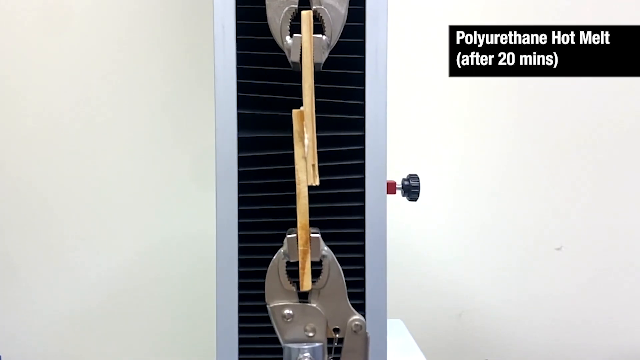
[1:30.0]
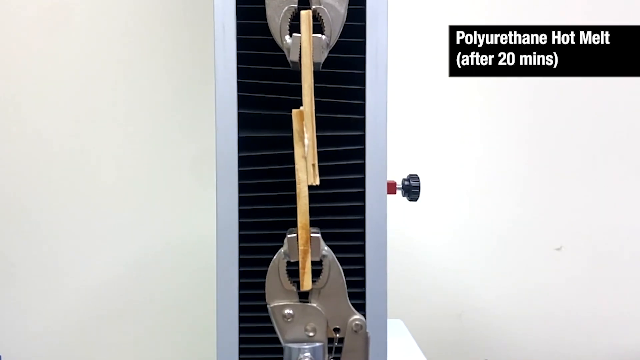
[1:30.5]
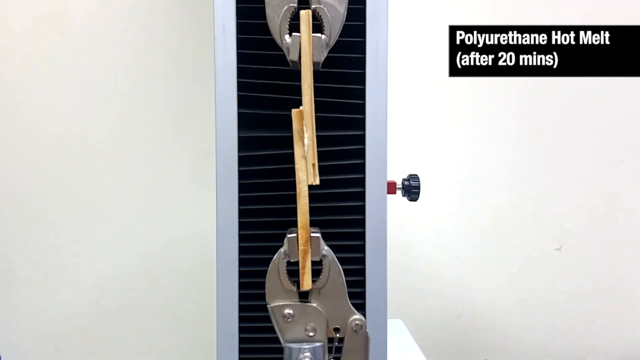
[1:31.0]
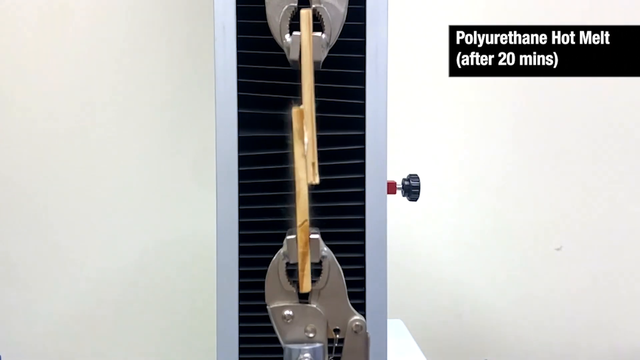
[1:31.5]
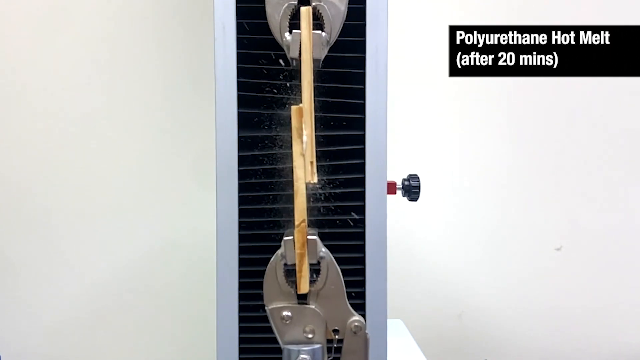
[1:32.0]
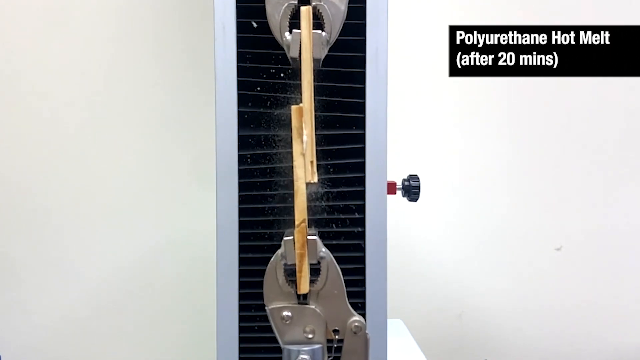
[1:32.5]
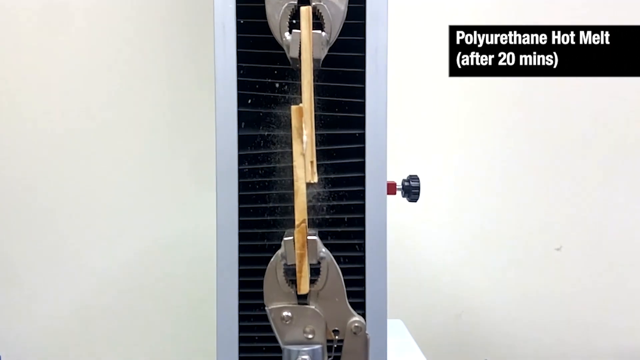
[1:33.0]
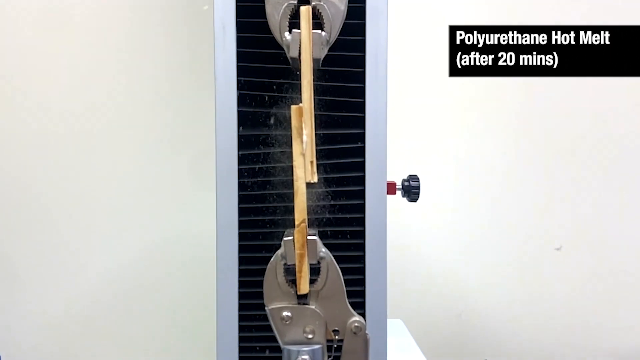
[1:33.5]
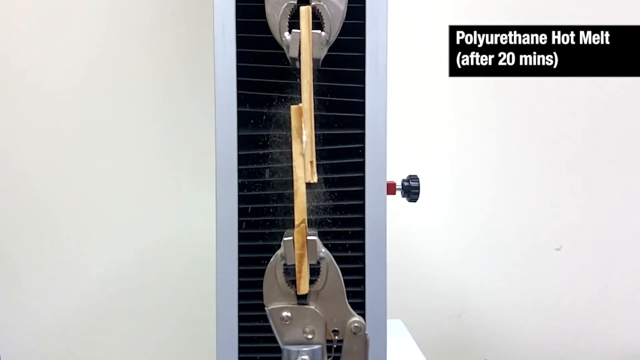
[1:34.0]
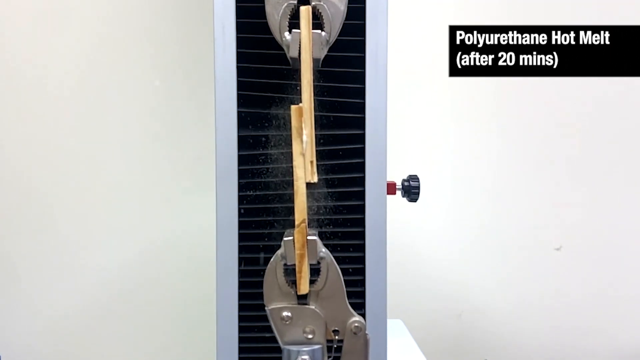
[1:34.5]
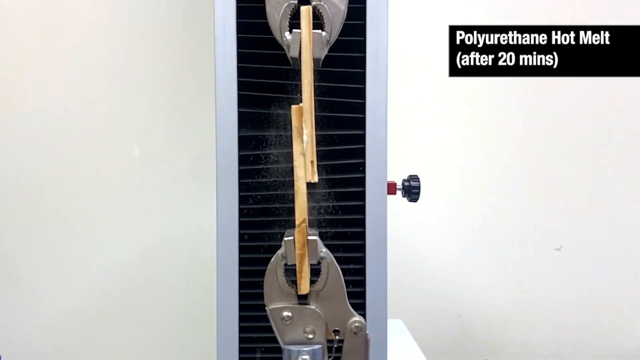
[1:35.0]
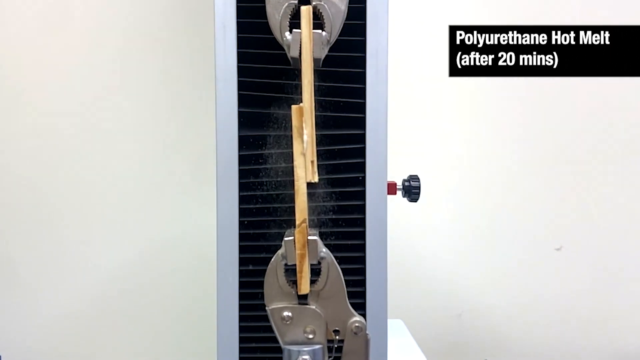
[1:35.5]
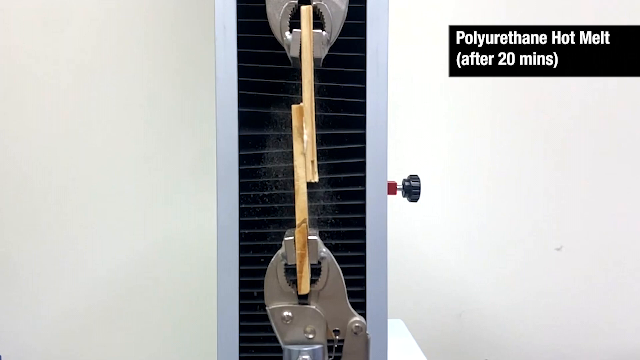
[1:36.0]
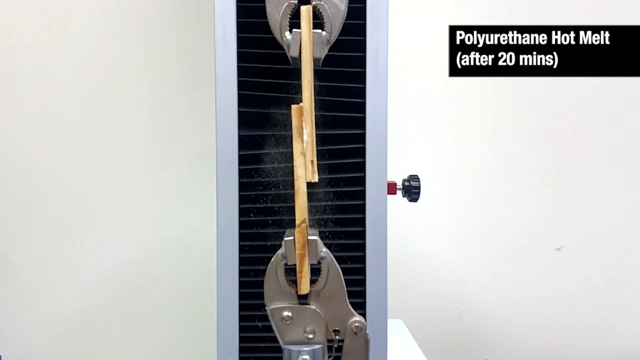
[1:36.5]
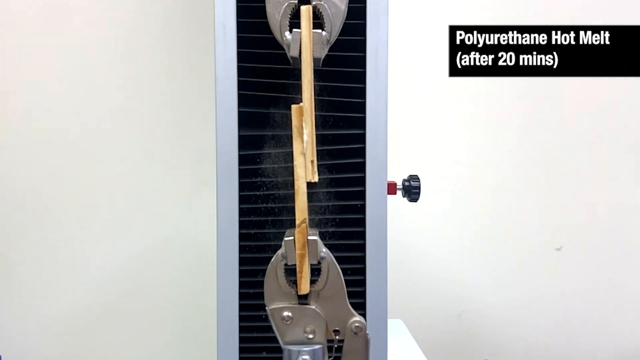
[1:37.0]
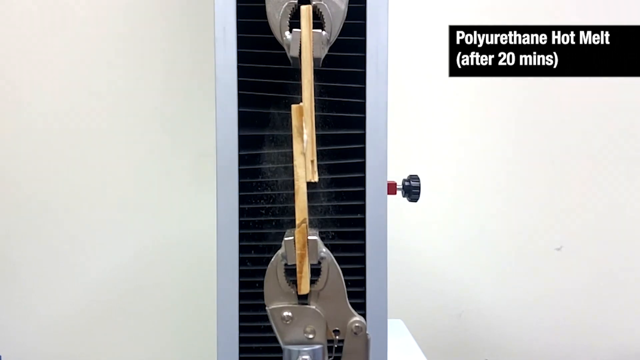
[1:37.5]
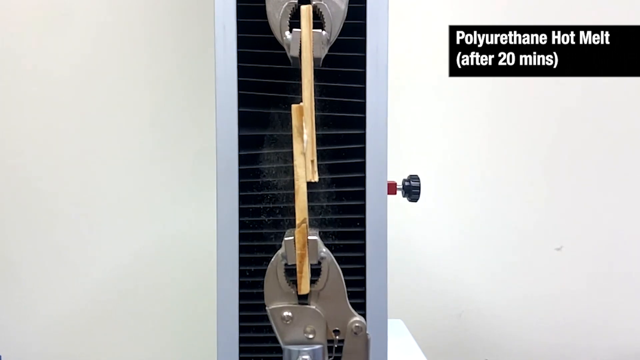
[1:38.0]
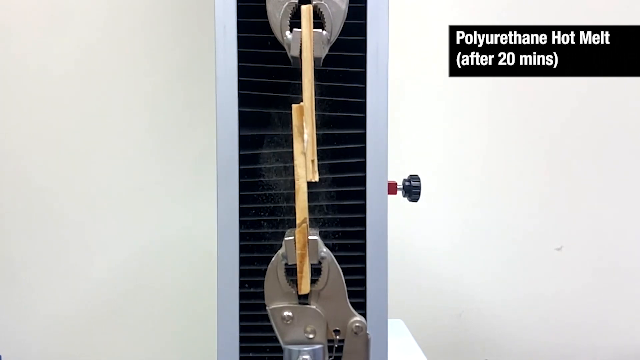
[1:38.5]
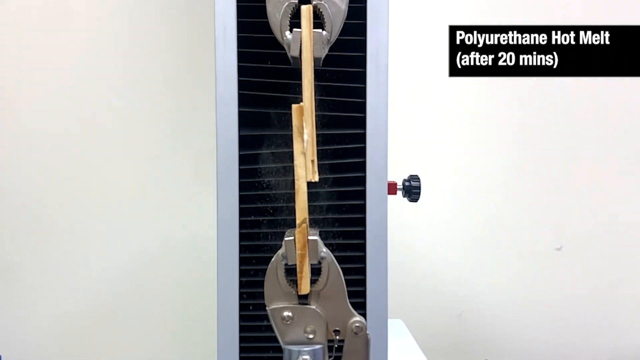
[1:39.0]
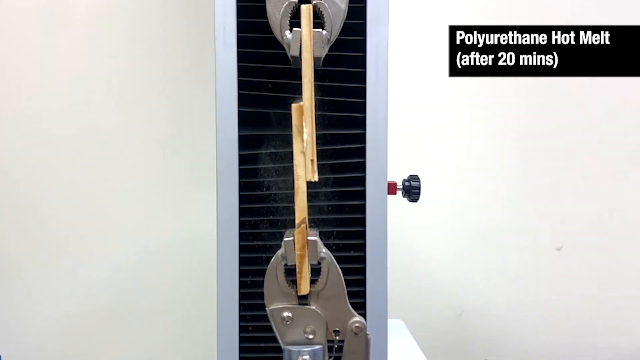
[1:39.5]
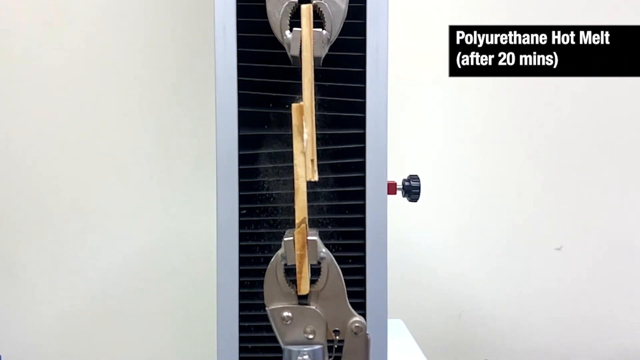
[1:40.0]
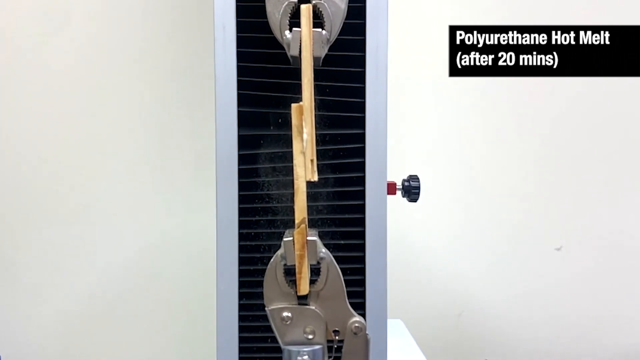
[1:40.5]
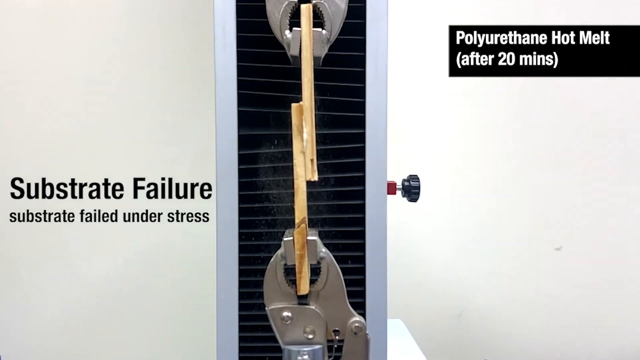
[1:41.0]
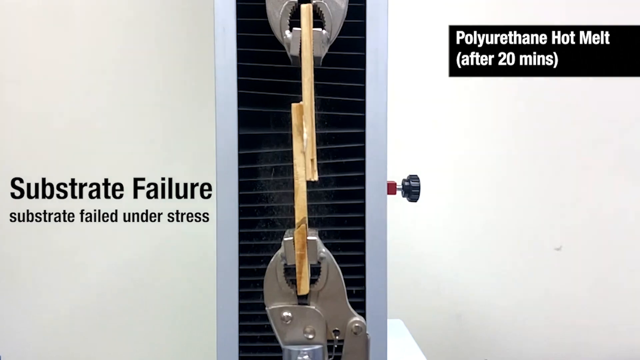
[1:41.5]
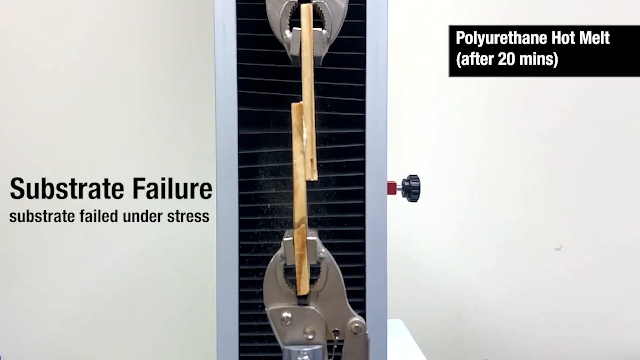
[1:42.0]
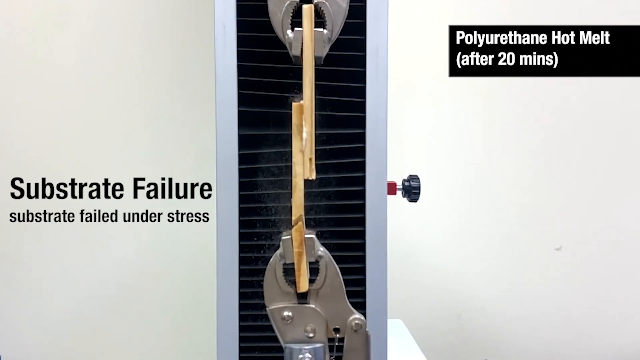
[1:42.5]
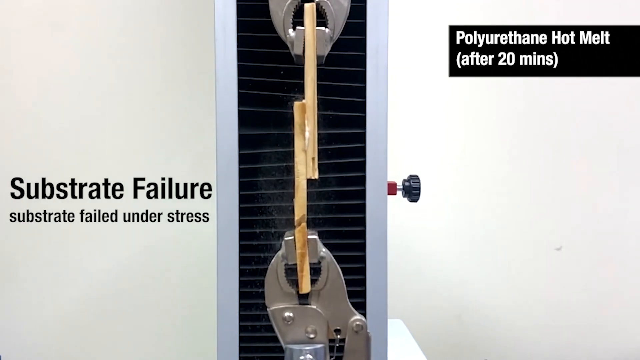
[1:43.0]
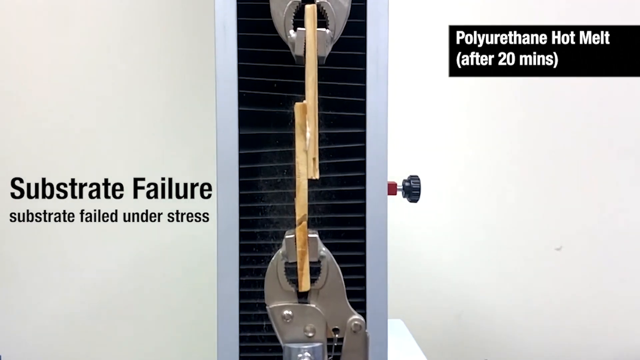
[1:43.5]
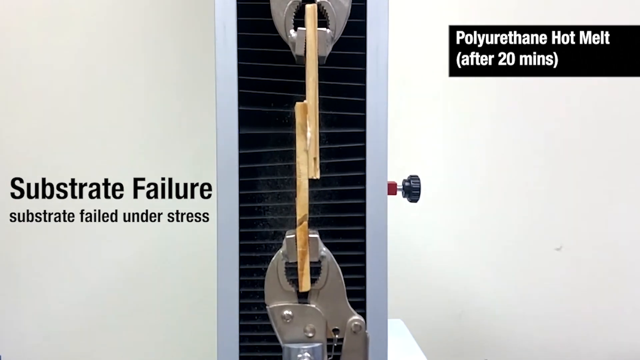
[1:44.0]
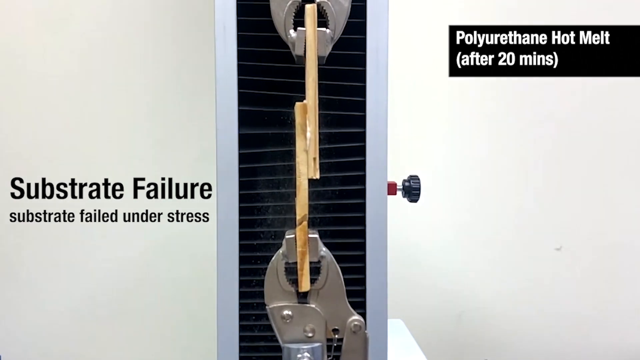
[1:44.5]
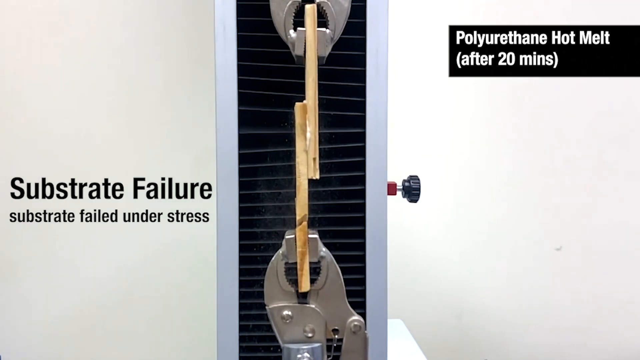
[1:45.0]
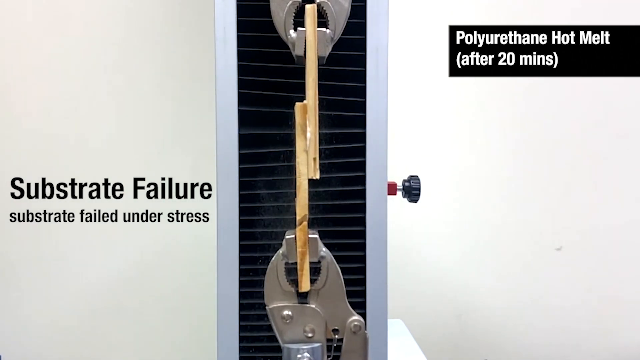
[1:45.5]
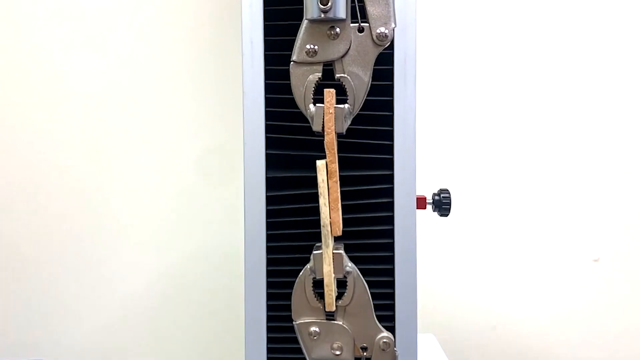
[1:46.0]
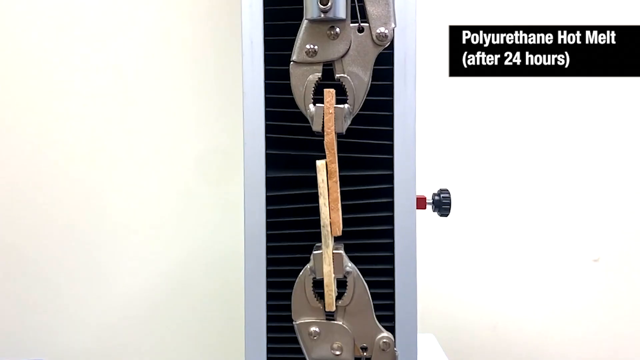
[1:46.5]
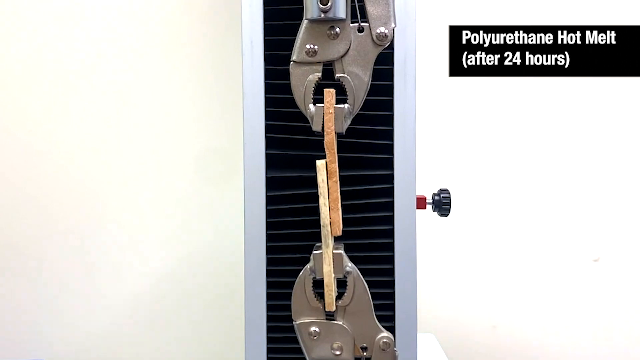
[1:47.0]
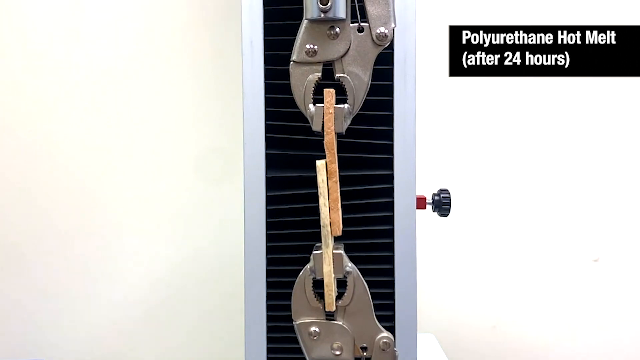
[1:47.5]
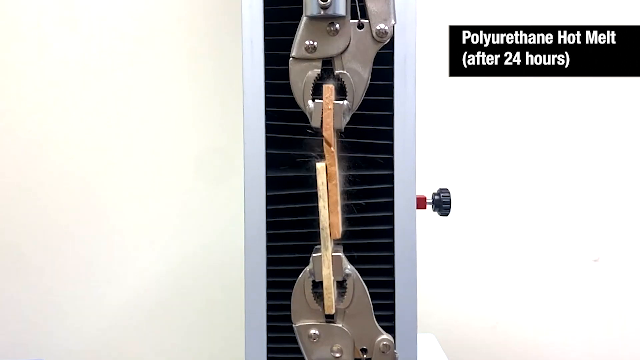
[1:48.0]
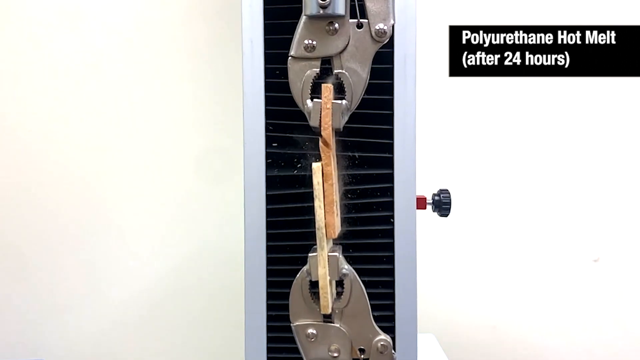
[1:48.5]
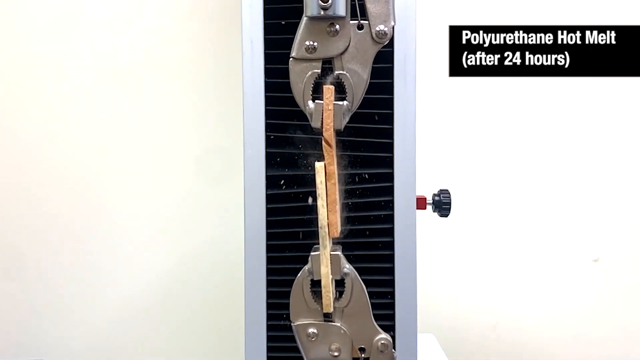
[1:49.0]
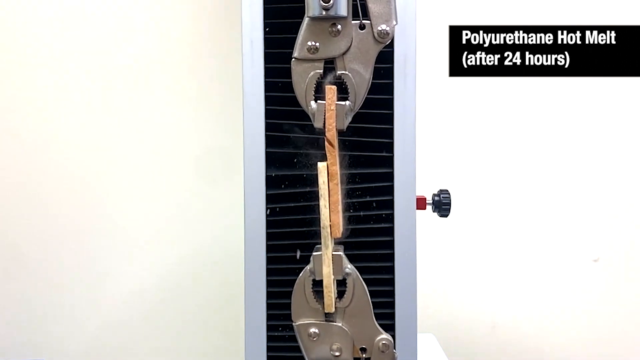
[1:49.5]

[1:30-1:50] A pulling machine with two silver metal clamps pulls apart two pieces of wood that have been hot glued together. A caption on the right side of the screen says "polyurethane hot melt after 20 minutes". The image is almost static except for a slight pulsating flashing of light, possibly from fluorescent lighting in the background. Black text then appears on the left: "substrate failure, substrate failed under stress". Towards the end, the top piece of wood cracks, but the glued area stays intact.